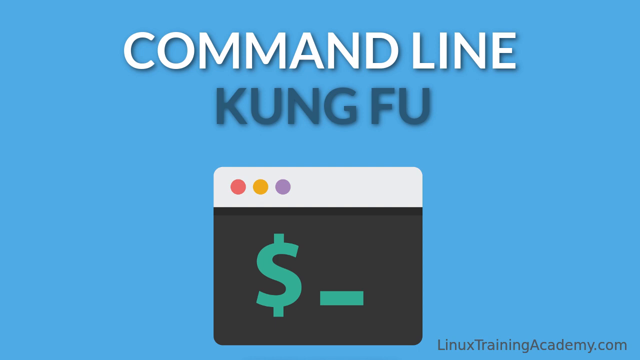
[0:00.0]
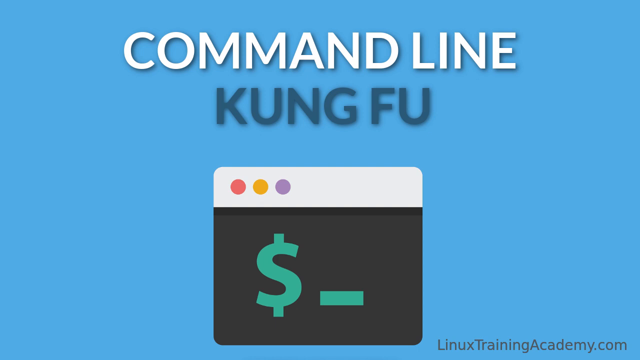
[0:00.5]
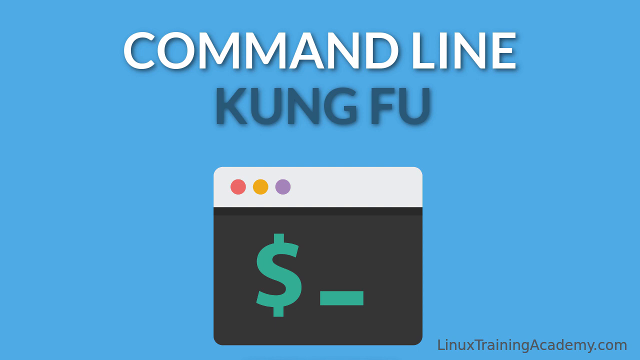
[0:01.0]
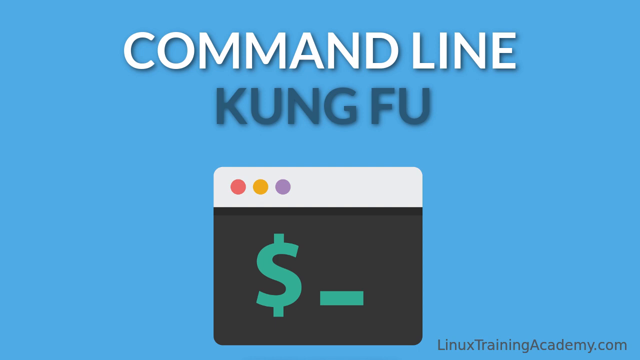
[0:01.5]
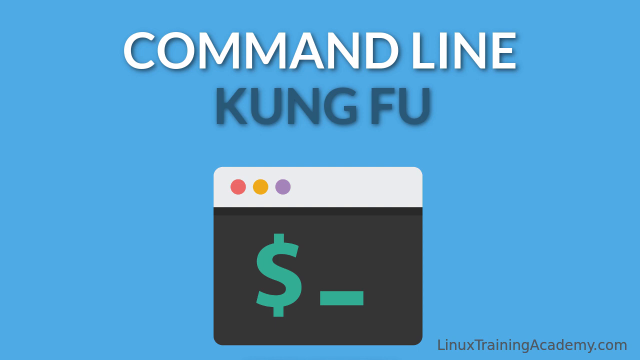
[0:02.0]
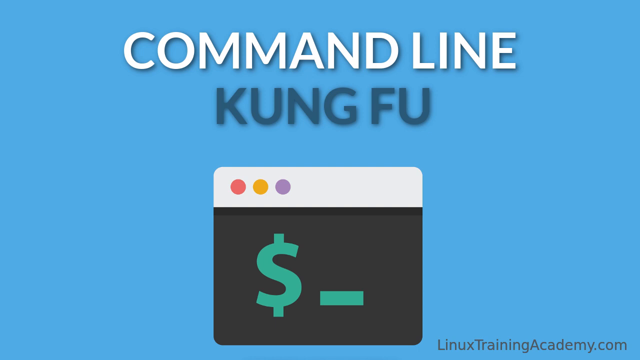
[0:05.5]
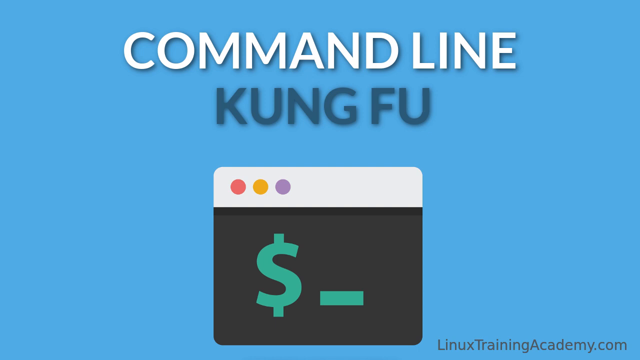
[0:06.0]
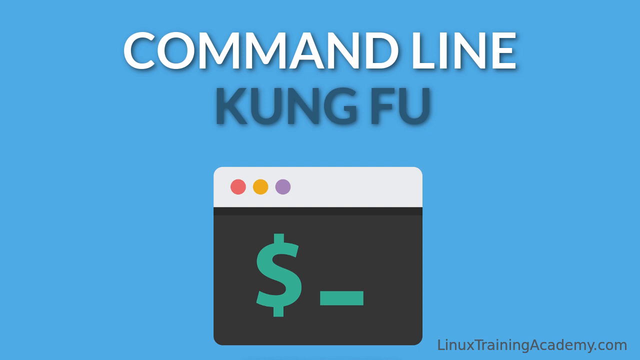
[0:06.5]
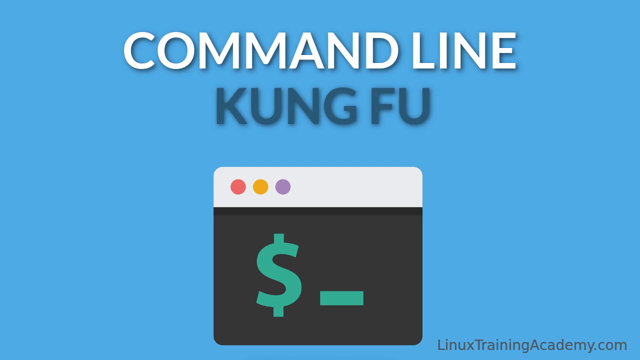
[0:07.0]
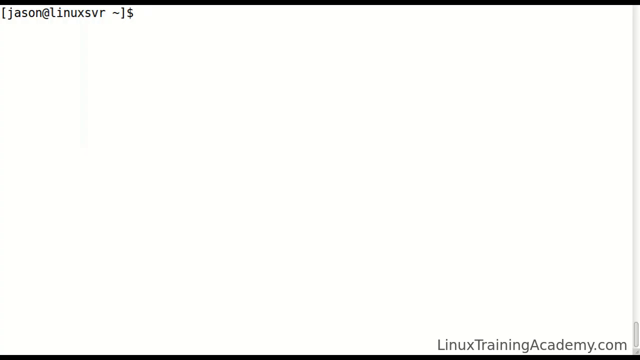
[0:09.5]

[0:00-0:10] The video opens on an intro screen with a light blue background. In the bottom right-hand corner, black text reads "linux training academy.com". Title text reads "command line kung fu", and below it is a small infographic that looks like a browser window, with three horizontal dots like on an Apple computer. In the main window of the infographic there is a dollar sign and an underscore in green font on a black background. The screen is held for about 10 seconds.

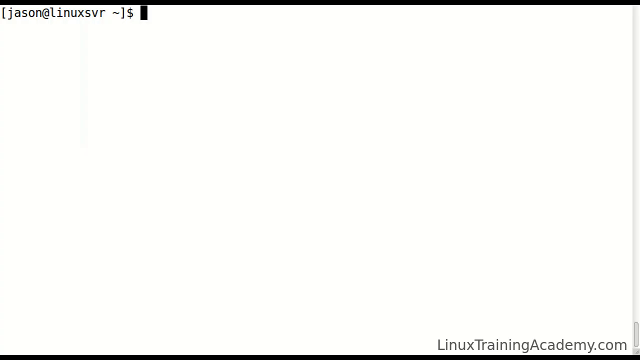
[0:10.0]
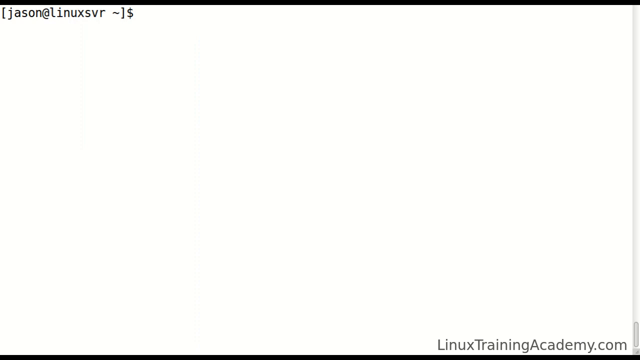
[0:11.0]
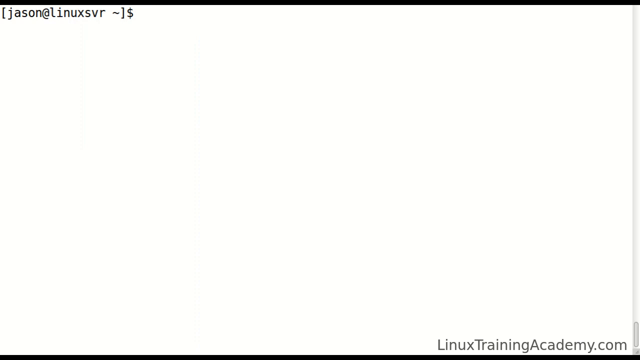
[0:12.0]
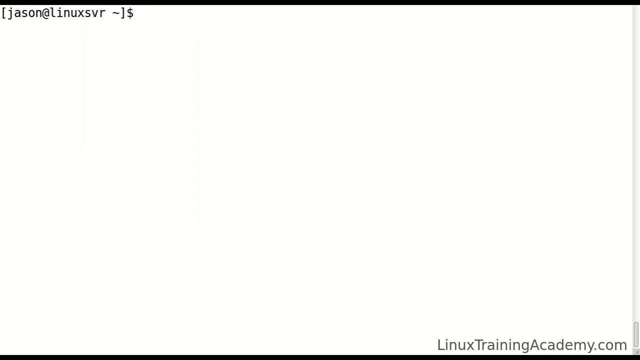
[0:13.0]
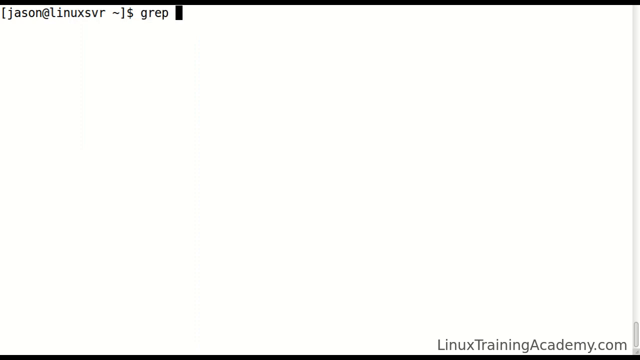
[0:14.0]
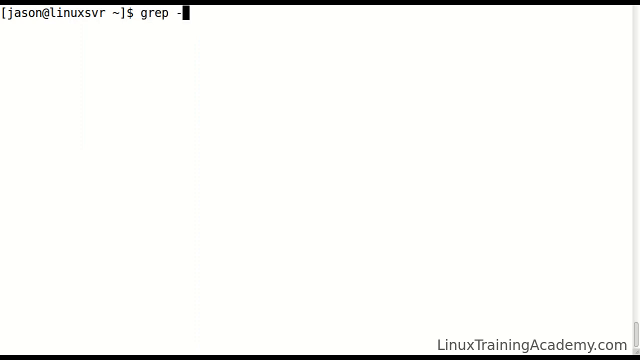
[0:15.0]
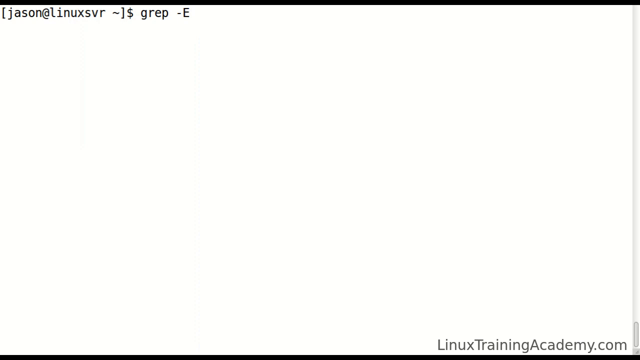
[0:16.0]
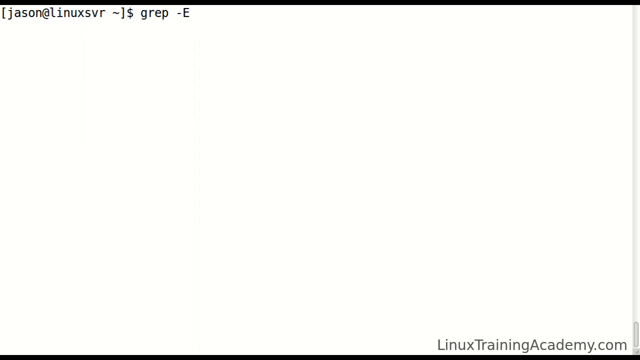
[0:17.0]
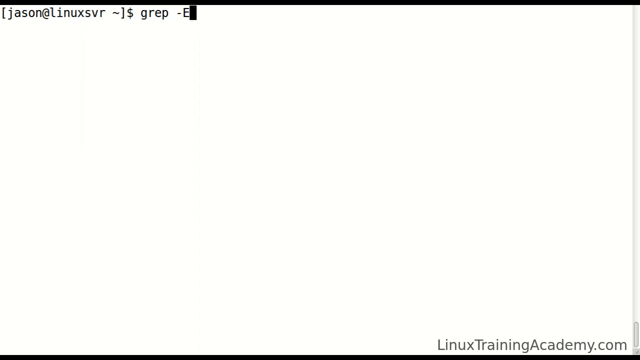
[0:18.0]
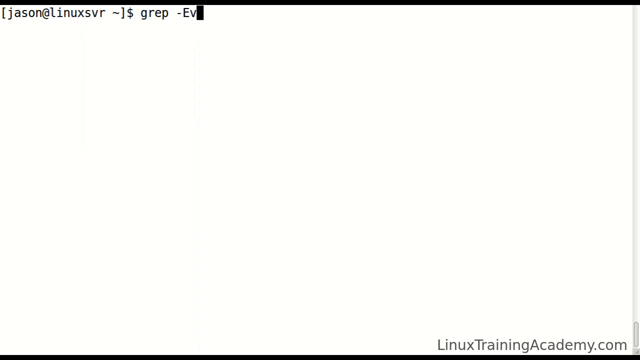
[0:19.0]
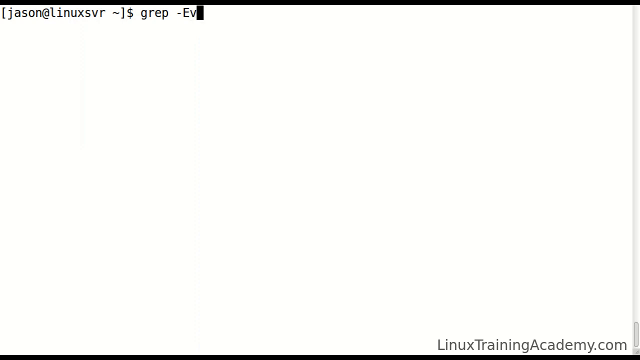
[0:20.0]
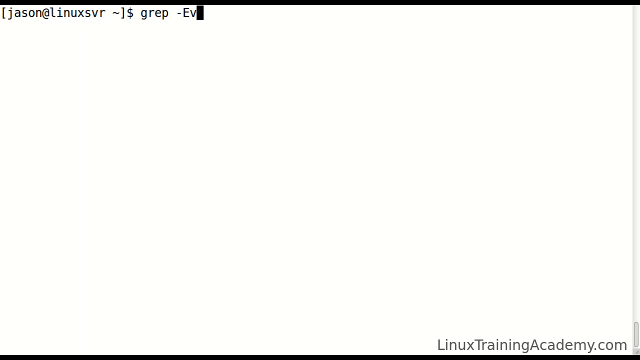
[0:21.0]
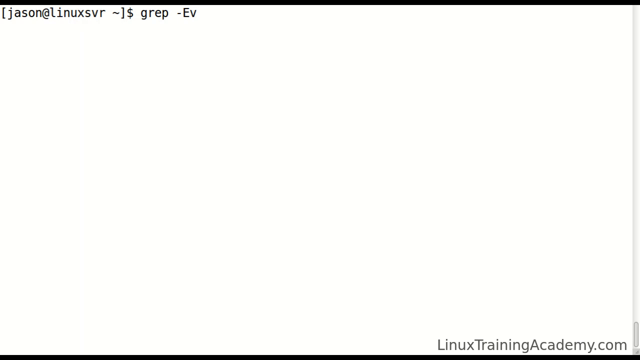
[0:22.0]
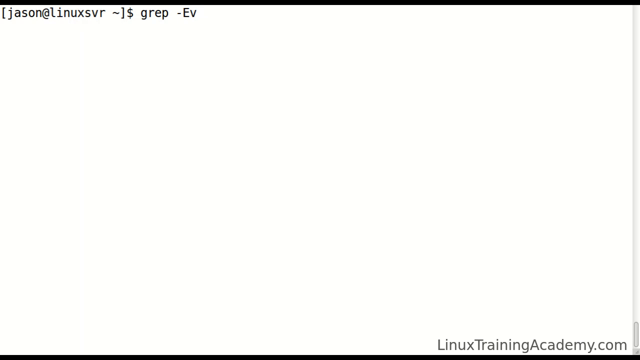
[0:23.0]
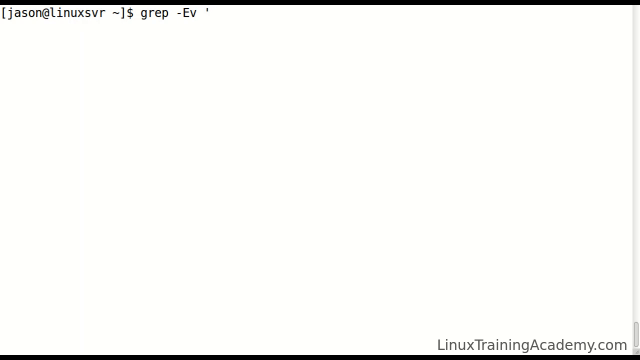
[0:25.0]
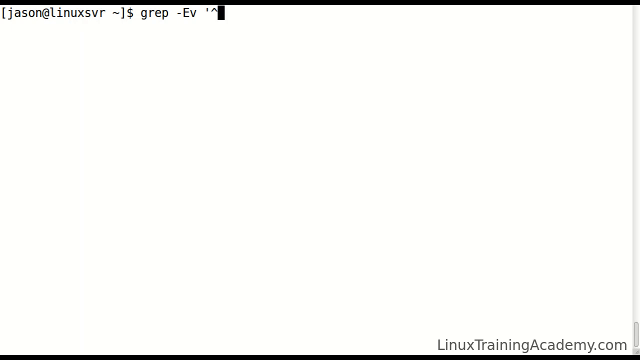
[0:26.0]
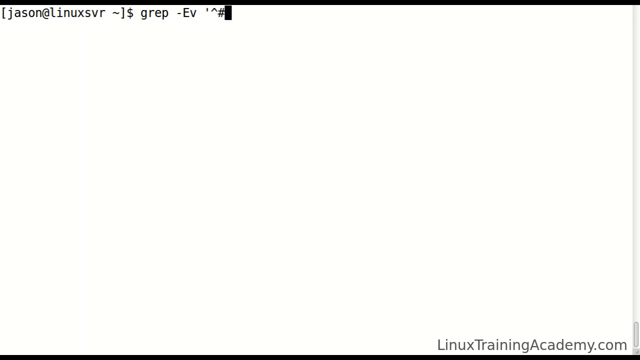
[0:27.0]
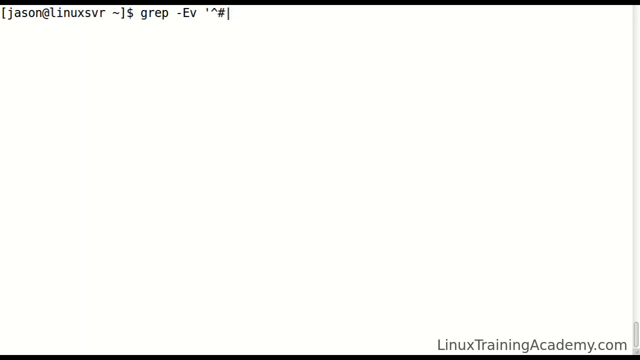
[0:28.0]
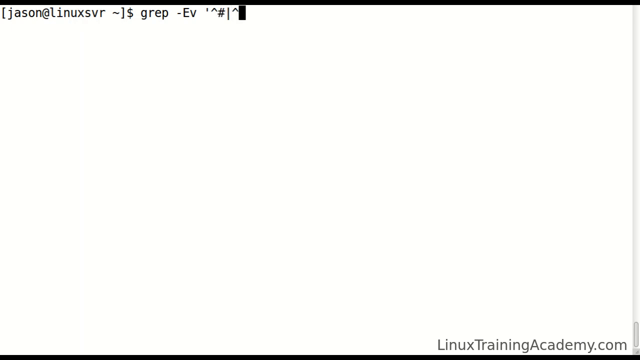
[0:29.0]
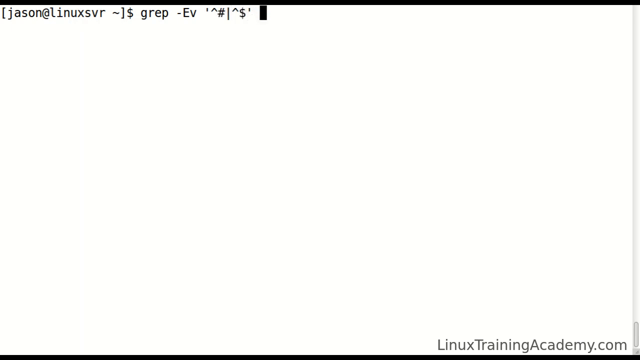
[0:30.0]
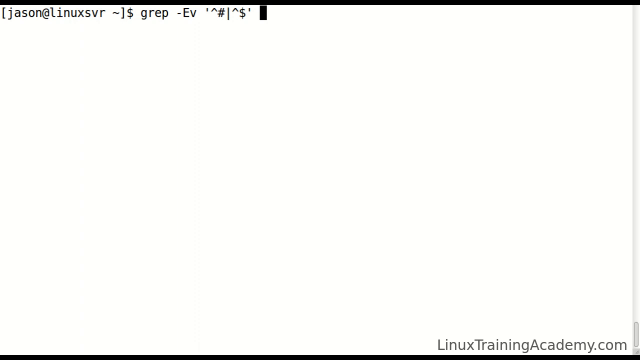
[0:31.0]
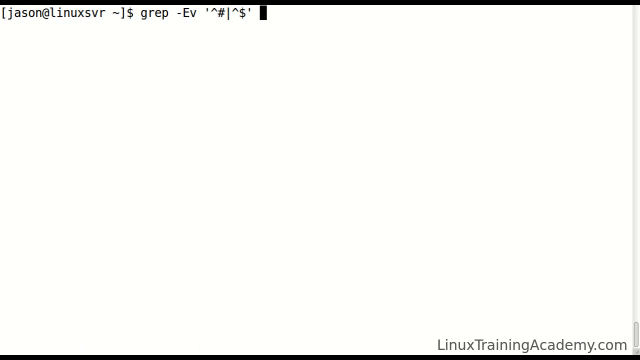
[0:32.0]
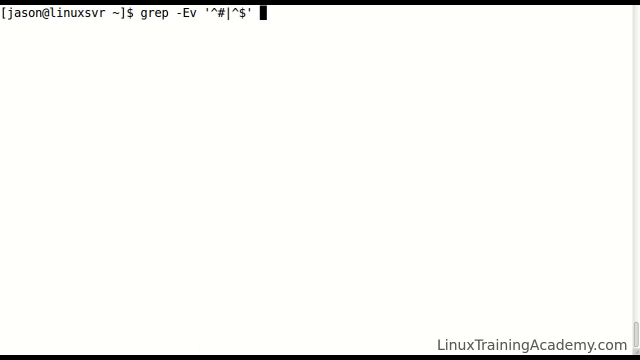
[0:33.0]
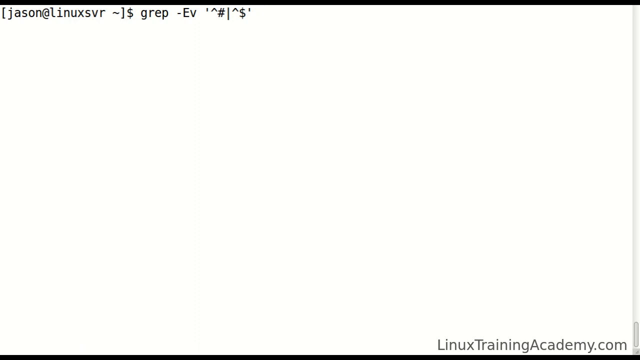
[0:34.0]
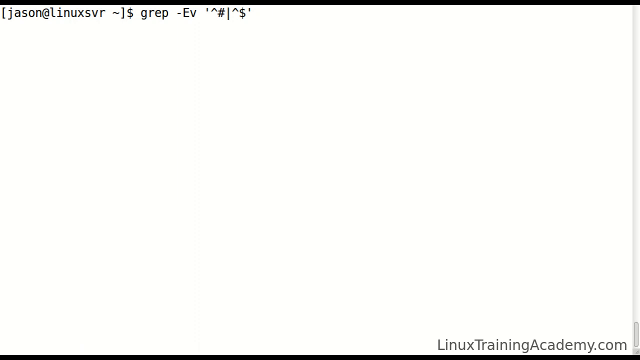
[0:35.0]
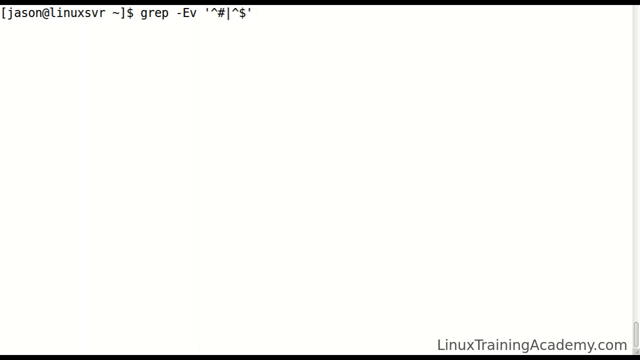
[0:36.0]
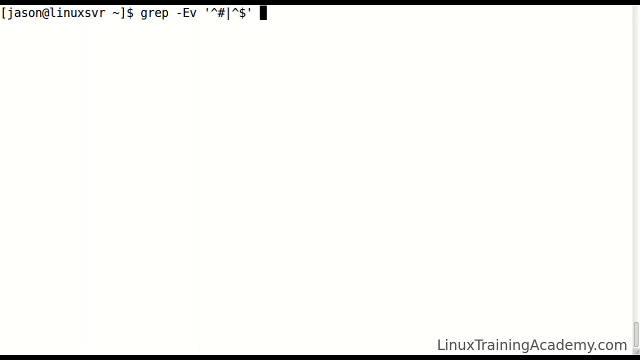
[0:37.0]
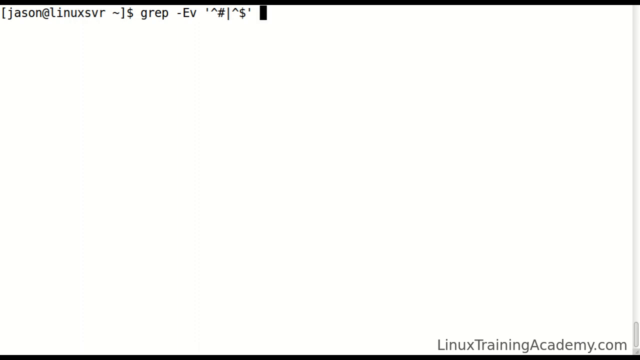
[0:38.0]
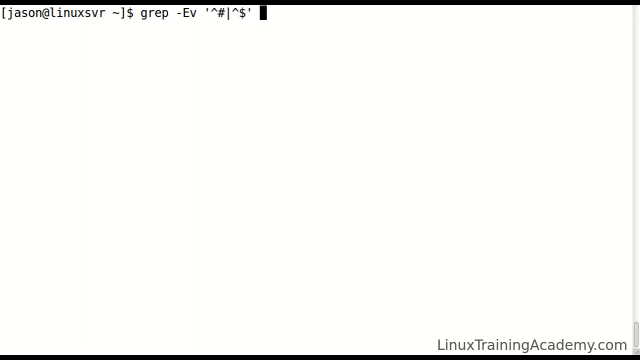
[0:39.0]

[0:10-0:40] A screen with a white background appears, with a grey scrollbar visible on the right side, so it looks like it is taken from a window, such as a notepad window. Black text in the bottom right-hand corner says "linuxtrainingacademy.com". In the top corner there is a line of code with a flashing cursor next to it. The cursor begins to move to the right as text is typed, flashing constantly at the end of the text, and continues across the top of the screen as more code is typed. The code reads "[jason"linuxsvr ~ ]$ grep -Ev '^# |^$'". It is black text on a white background, with no other information on the screen and no header menu for the program window.